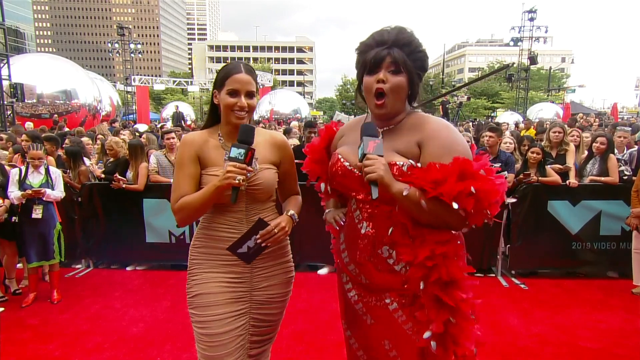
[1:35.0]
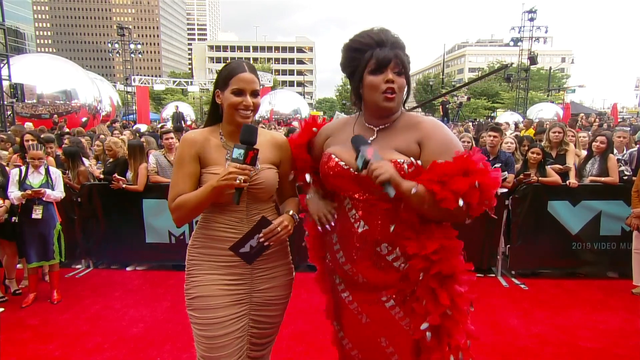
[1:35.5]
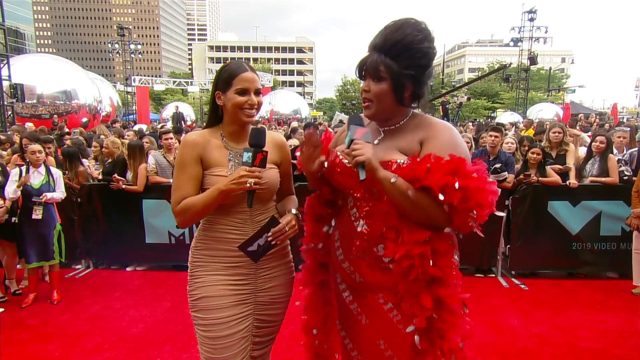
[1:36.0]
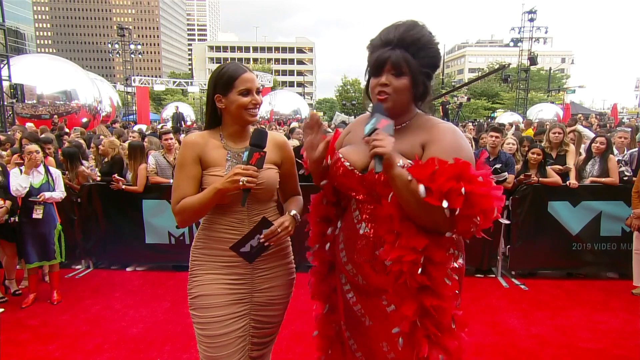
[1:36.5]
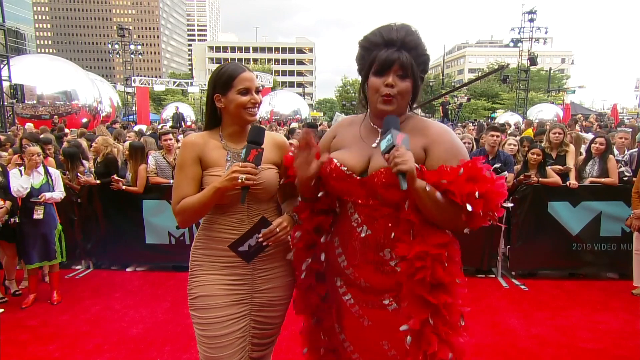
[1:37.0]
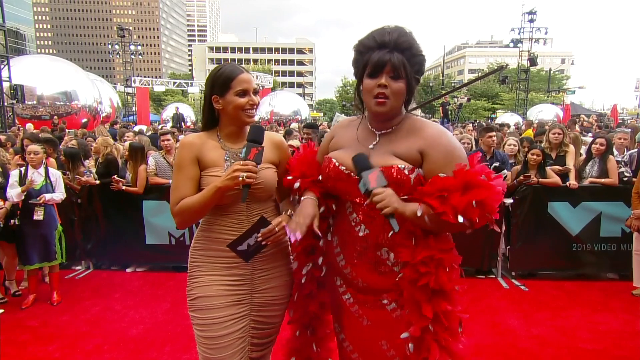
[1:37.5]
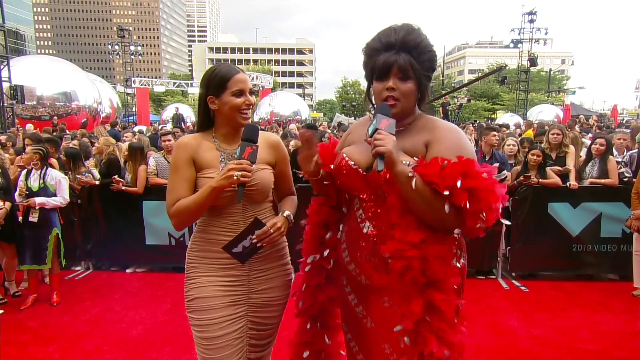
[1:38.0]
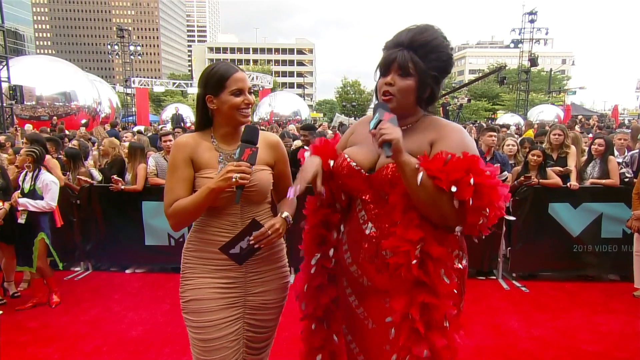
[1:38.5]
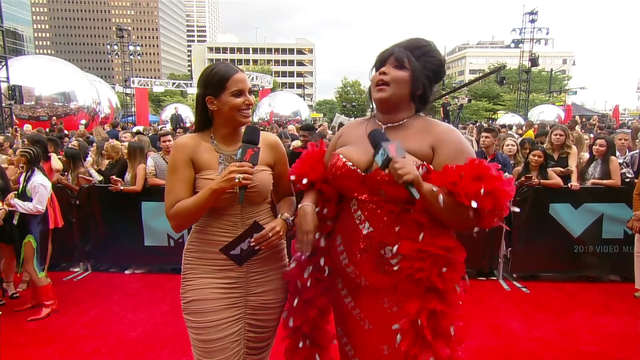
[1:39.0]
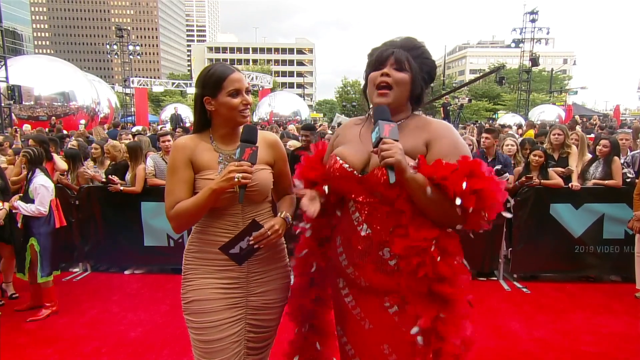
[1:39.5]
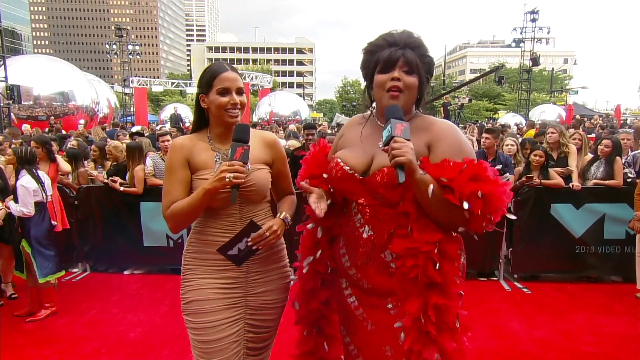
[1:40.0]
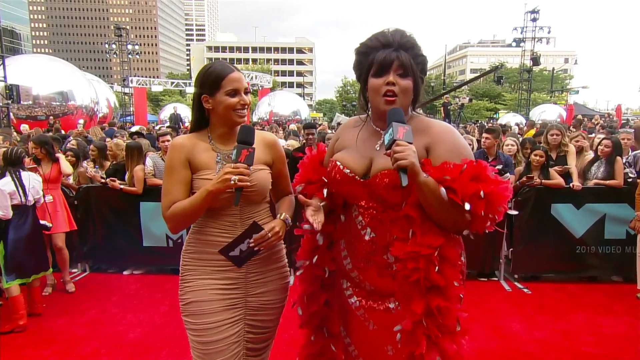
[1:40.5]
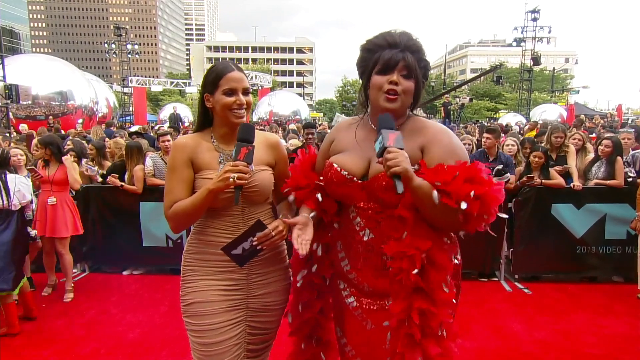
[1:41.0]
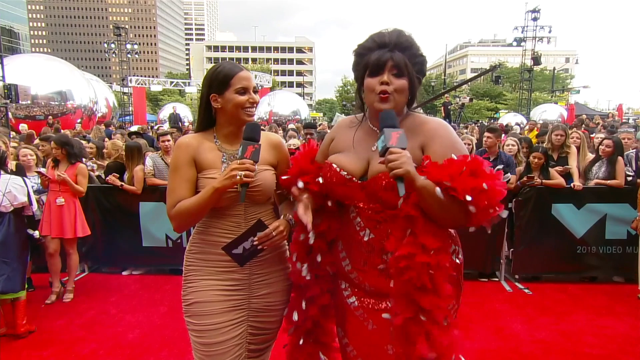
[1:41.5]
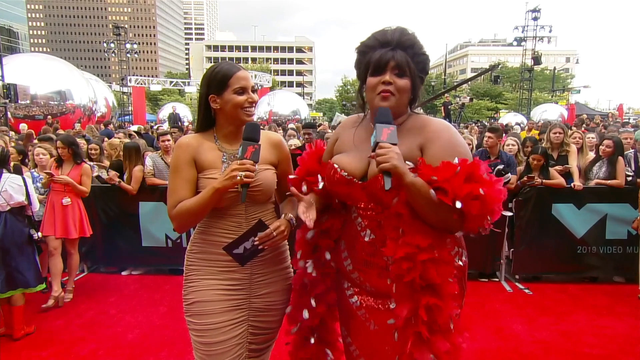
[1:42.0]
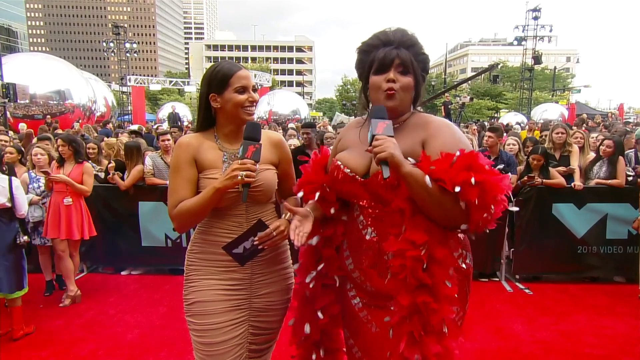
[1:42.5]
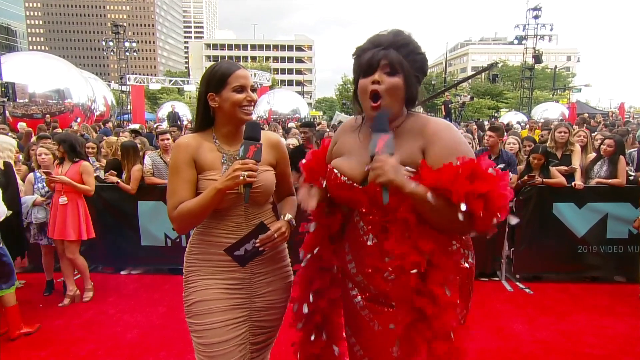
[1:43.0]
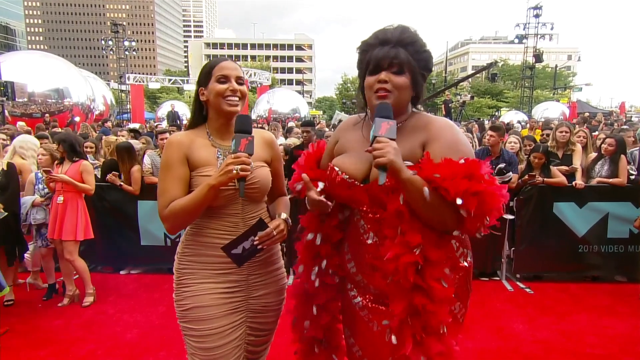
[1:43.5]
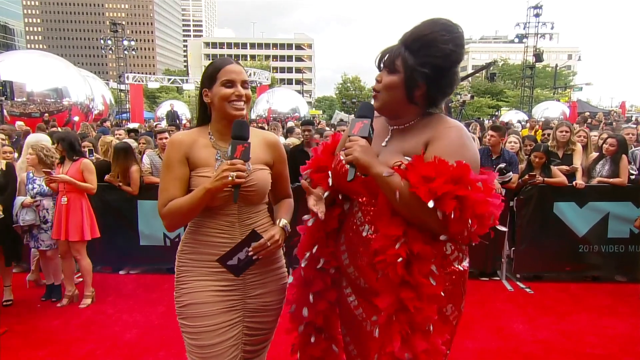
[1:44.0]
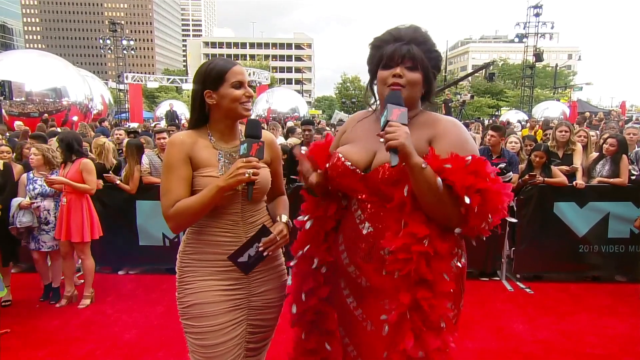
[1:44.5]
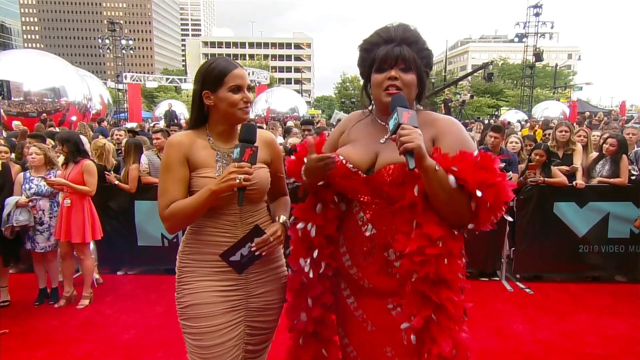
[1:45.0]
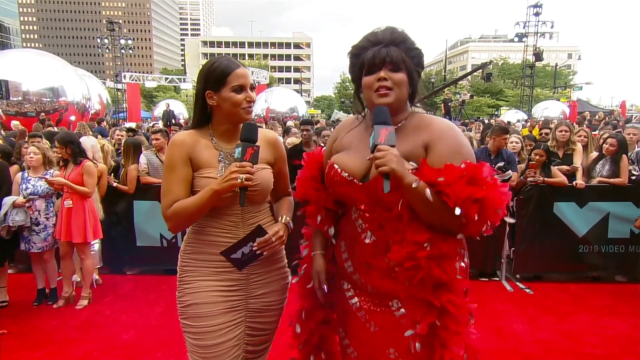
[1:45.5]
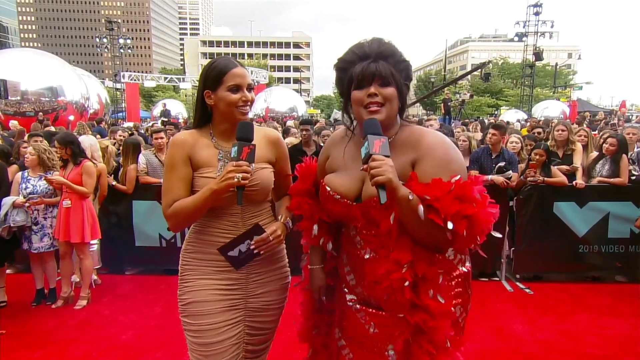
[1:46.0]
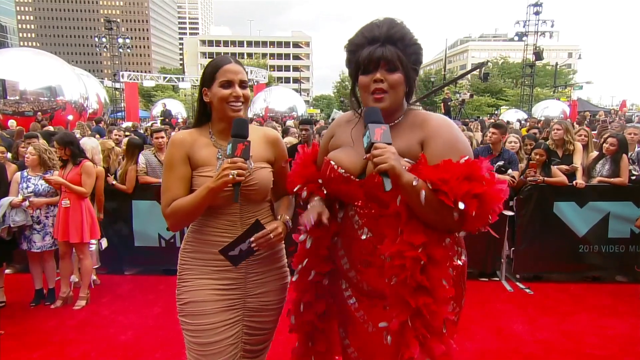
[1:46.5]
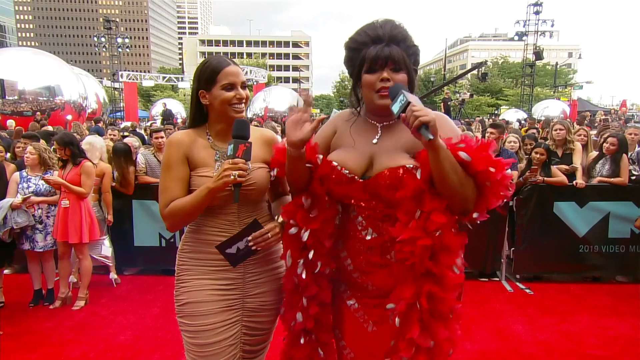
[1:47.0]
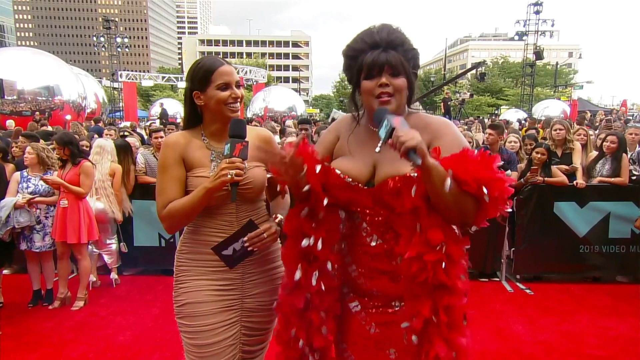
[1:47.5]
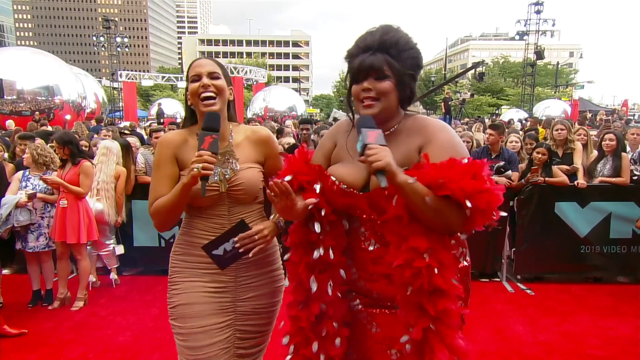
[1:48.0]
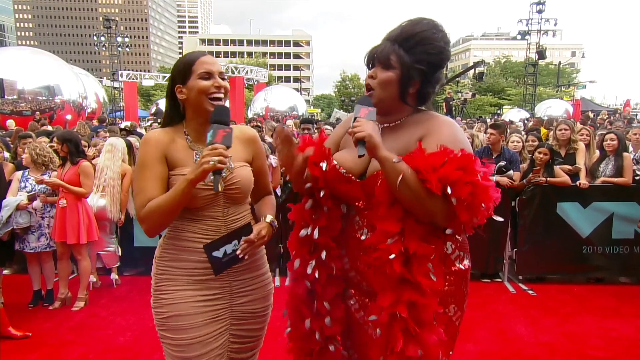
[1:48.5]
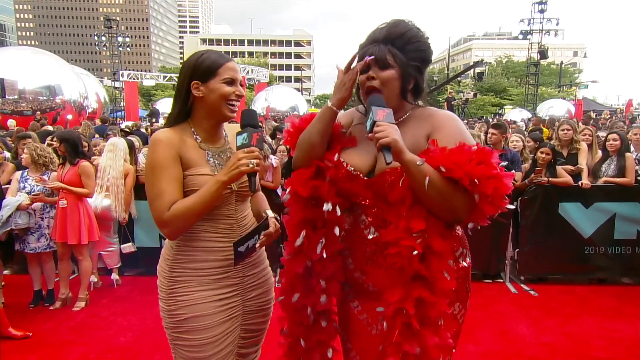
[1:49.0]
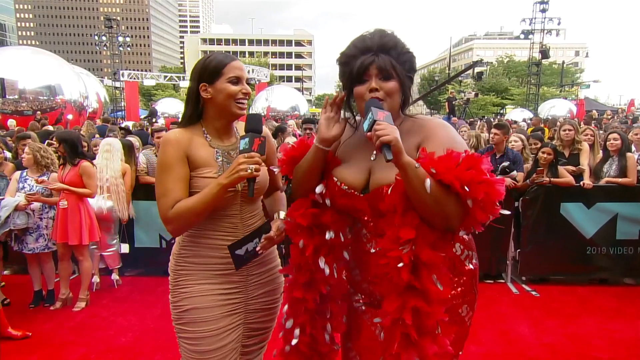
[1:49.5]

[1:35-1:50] Lizzo talks very animatedly again, kind of almost flapping the hand that is not holding the microphone, as if trying very hard to get her point across. She talks directly to the camera again, leaning down a little, which gives her words extra emphasis as a direct address to the camera. She kind of waves her hand vertically, brushes her bangs away again, and continues bending slightly down to look into the camera. The location looks like some kind of city square, with tall multi-story buildings that look like offices or apartment buildings all around. In addition to the red carpet, many red flags are positioned around, and traffic lights are visible in the background, suggesting a street fairly close by.